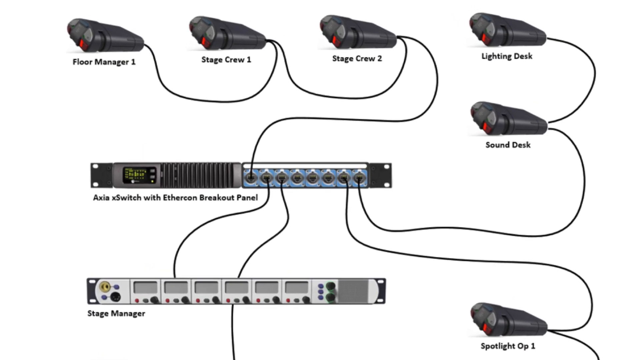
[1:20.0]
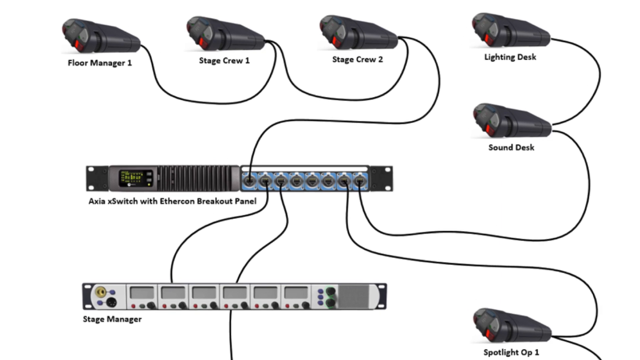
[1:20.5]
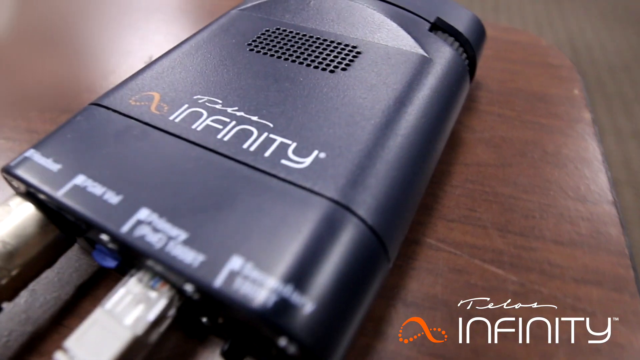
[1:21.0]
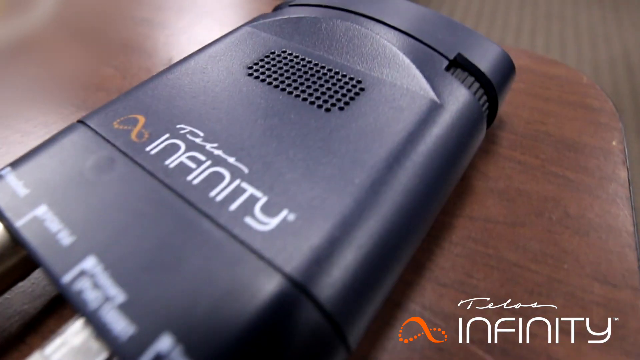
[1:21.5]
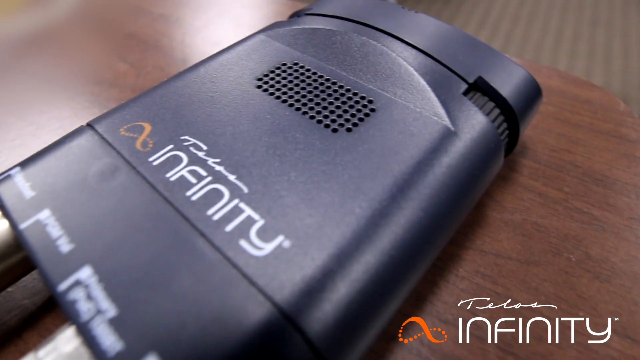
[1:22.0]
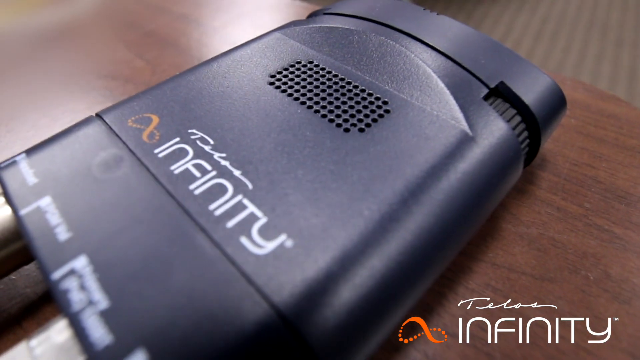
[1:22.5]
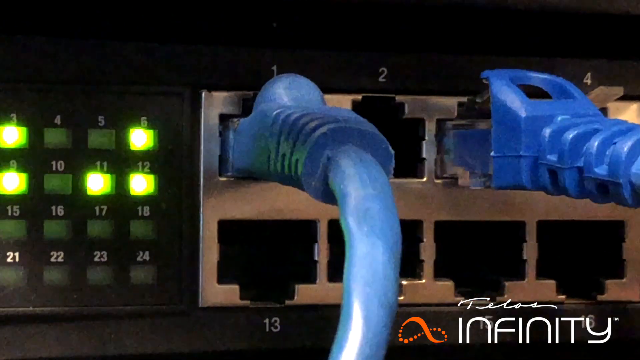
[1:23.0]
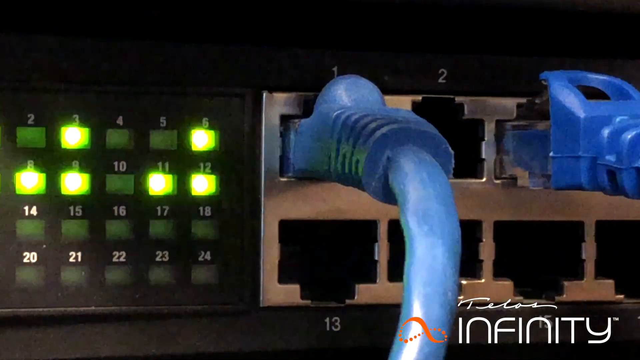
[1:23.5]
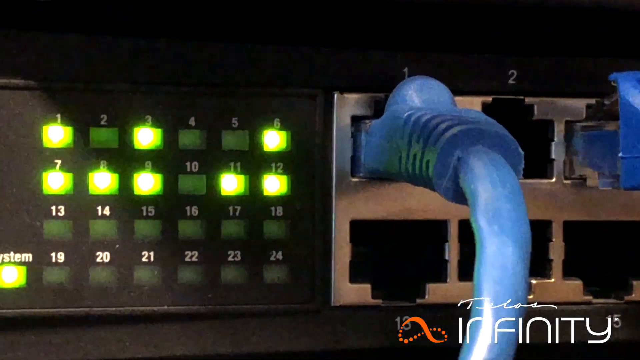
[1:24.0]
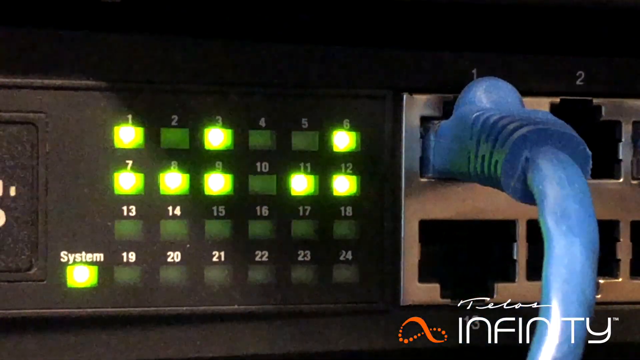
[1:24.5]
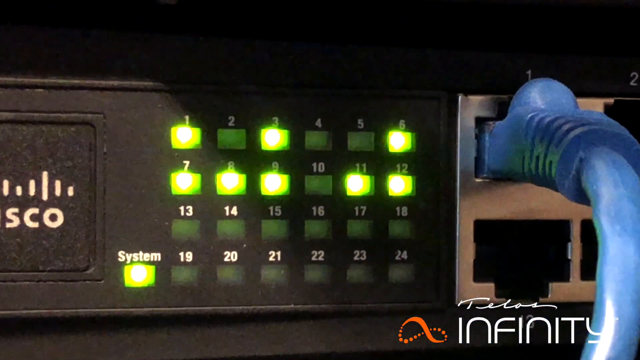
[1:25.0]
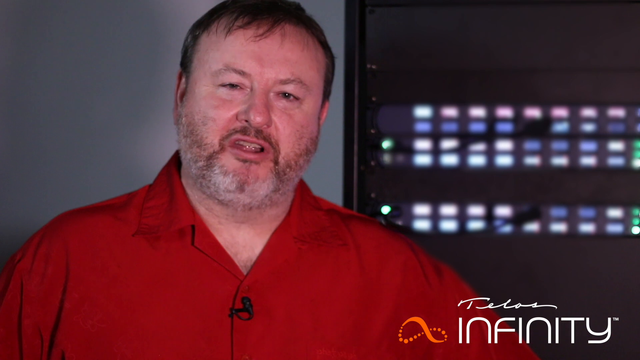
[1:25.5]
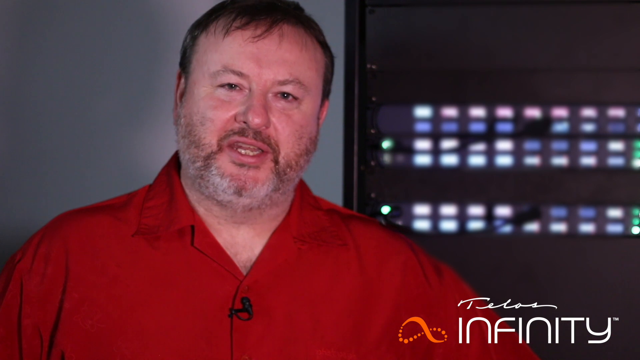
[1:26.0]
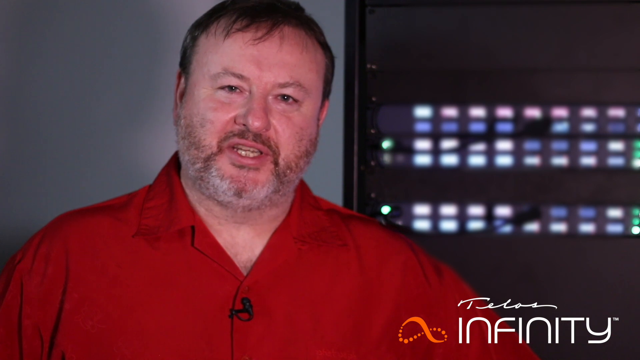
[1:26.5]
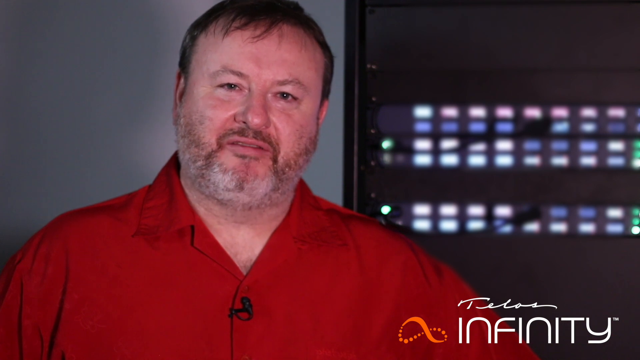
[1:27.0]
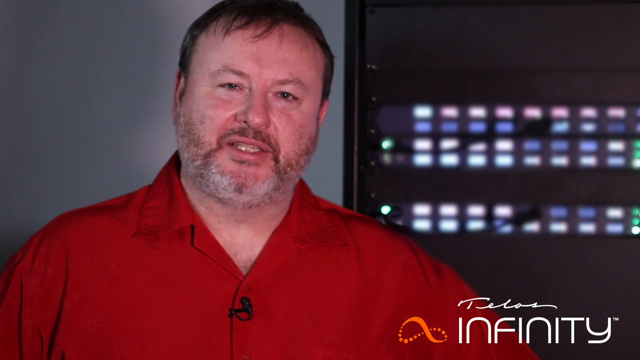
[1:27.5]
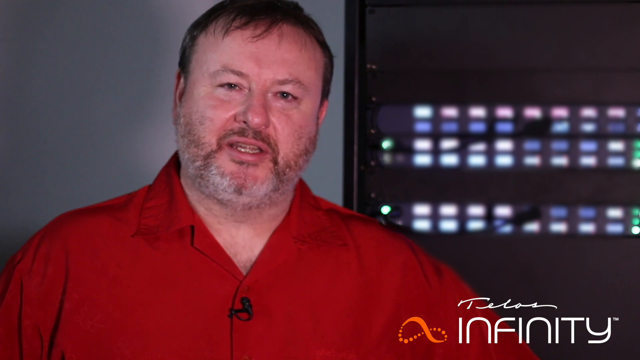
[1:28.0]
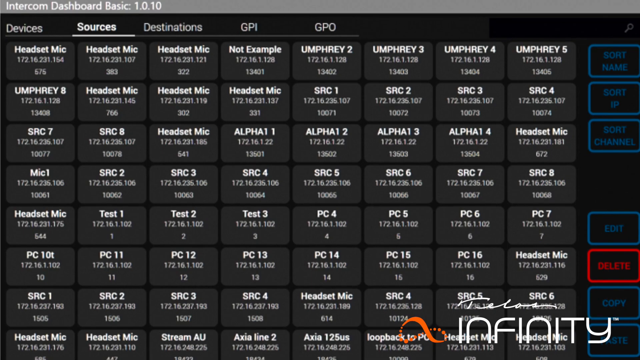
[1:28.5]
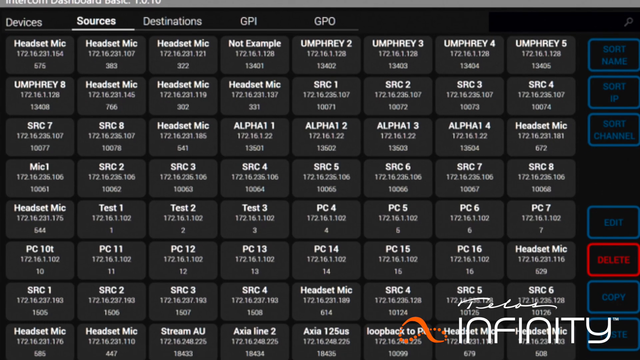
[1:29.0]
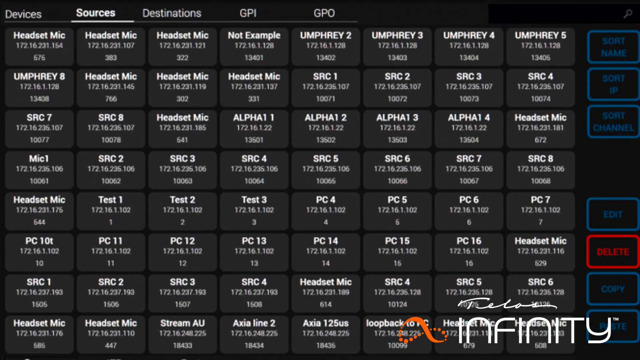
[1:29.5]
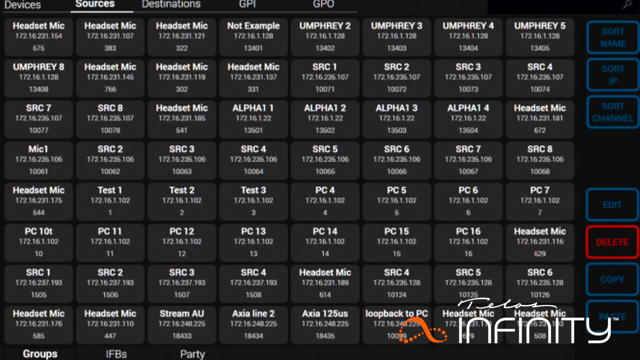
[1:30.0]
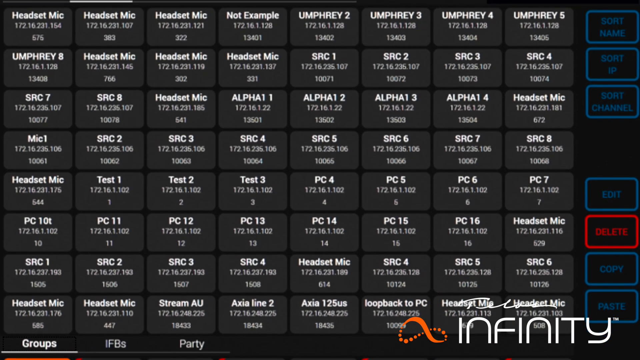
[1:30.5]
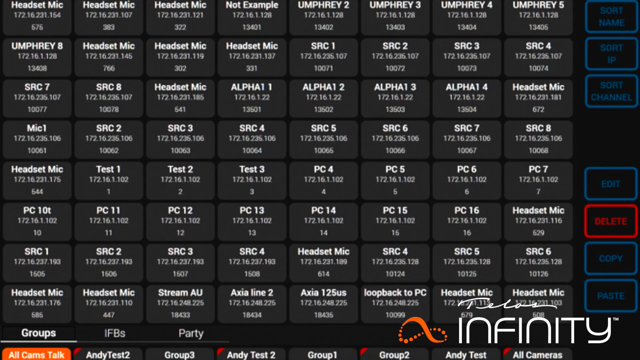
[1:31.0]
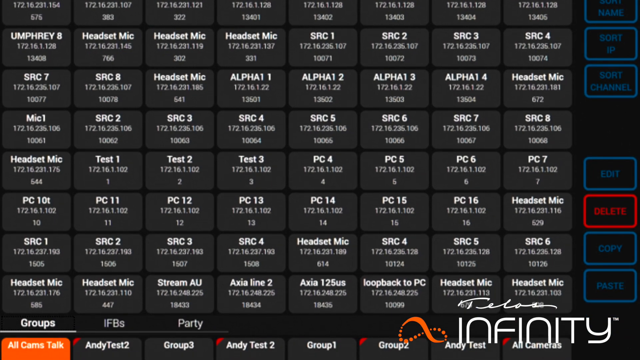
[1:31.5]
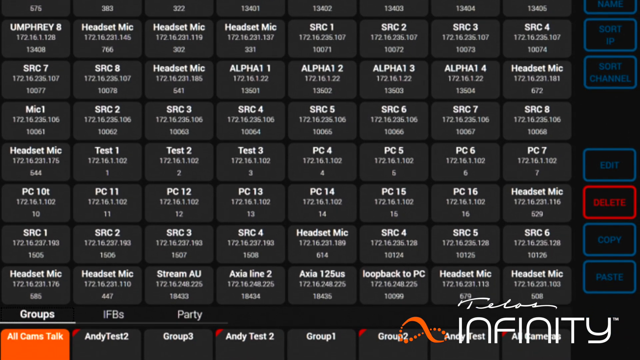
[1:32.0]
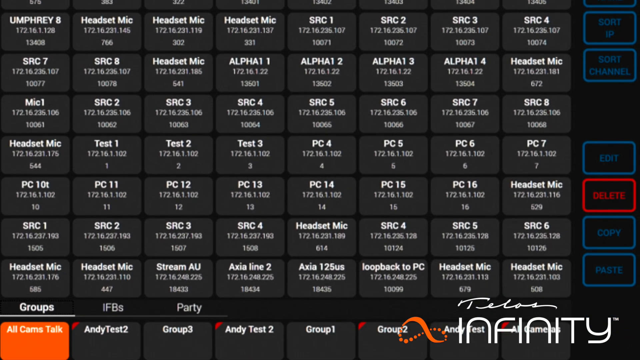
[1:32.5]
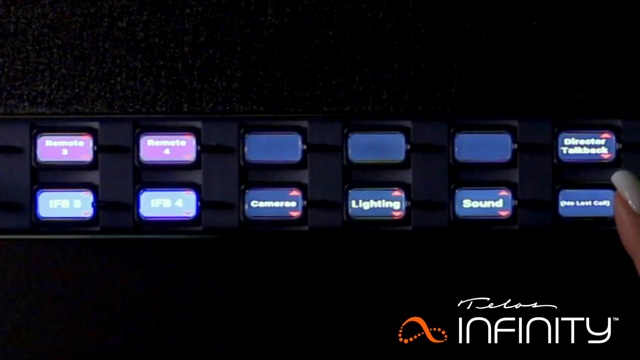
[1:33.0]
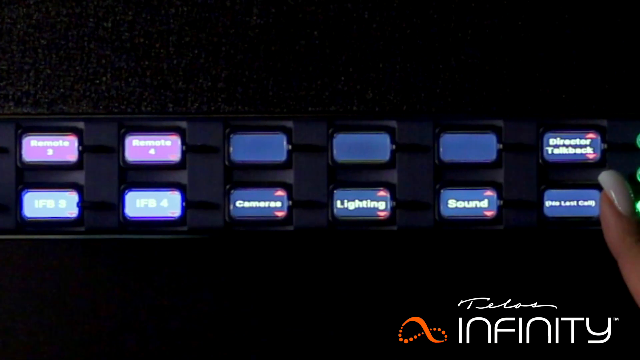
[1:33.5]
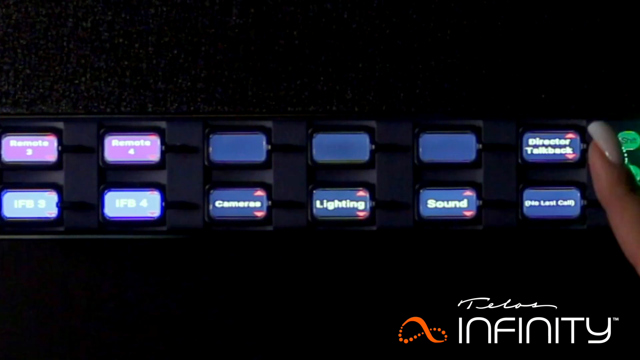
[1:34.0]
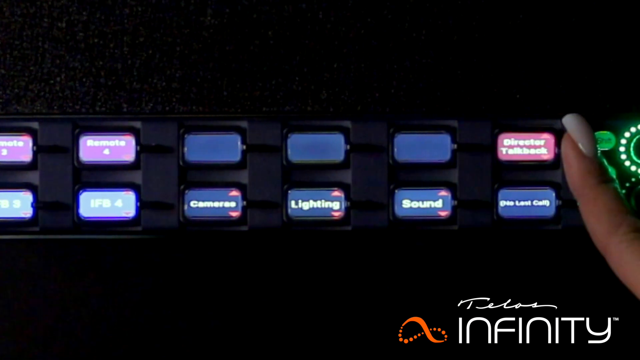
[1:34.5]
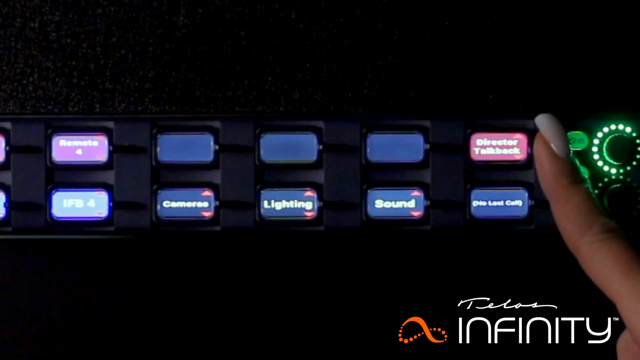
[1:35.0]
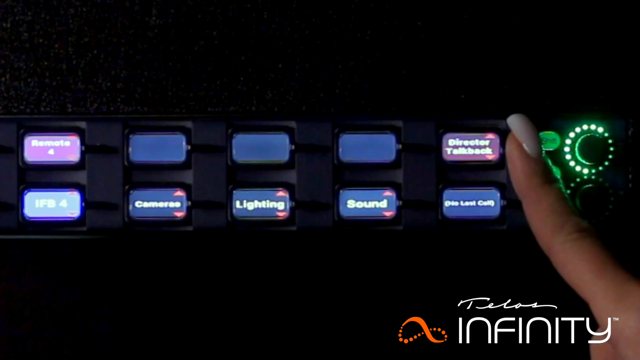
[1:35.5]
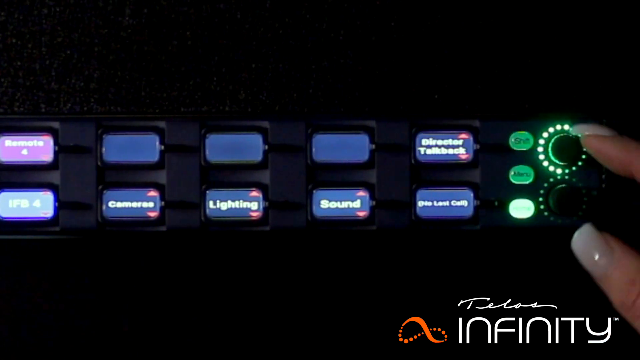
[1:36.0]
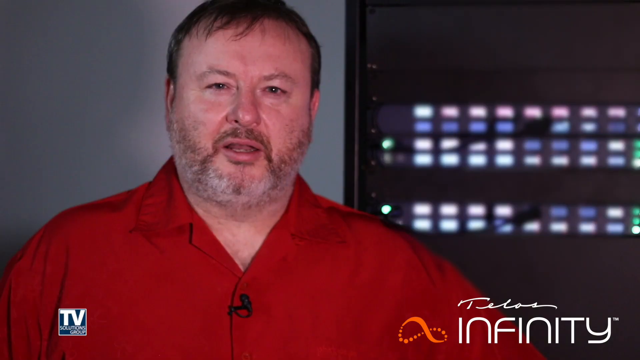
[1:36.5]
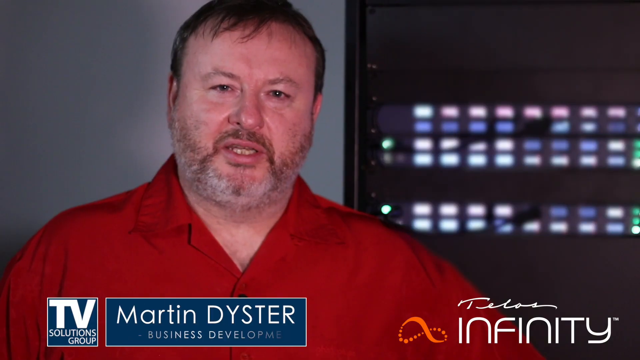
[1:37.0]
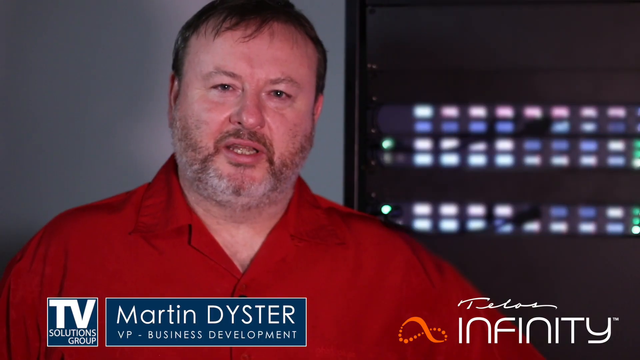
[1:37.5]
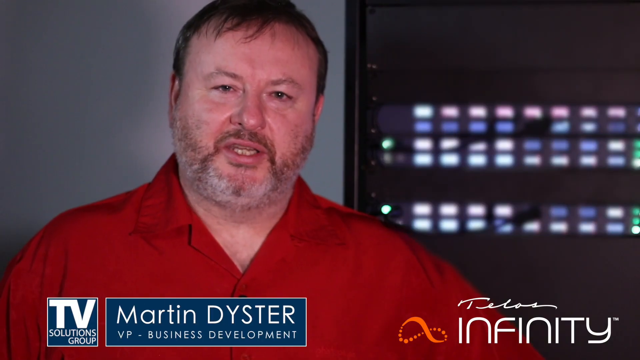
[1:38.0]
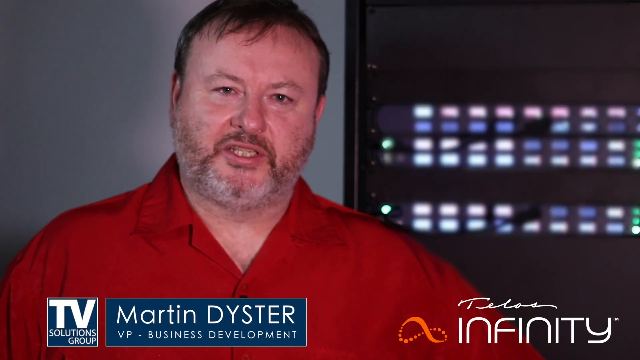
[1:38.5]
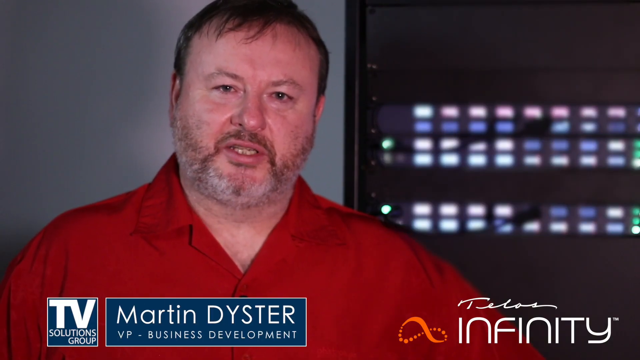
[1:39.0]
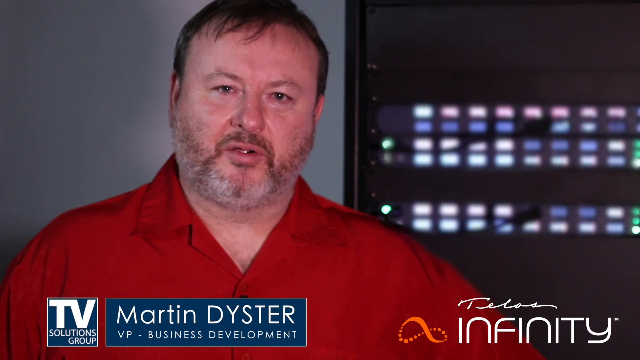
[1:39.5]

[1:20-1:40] A diagram shows indicators at the top for "Floor Manager 1", "Stage Crew 1", "Stage Crew 2" and "Flooding Deck", with "Sound Deck" underneath "Flooding Deck", a long illegible strip below, and at the bottom a bar that says "Stage Manager" with another illegible area to its right. Next, a black Infinity device is lying on a brown wood grain table. Green buttons flash on the left of the screen, in four rows labeled from 1 to 24. On the right side of the screen, a blue cord is plugged into the back of the device, with another blue cord plugged in to the right of it. The man in the red button-down shirt, seen repeatedly in the video, speaks to the camera again. The screen changes to a black screen with white text labels for all the microphones and headsets, in seven layers. On the top left, "sources" is highlighted, while the unlit designations are "devices", "destinations", "GPI" and "GPO". Then two rows of buttons appear in the middle of a screen with a flat background, and a Caucasian hand points to a lit button. A thumb and index finger then move to a device on the right of the screen that has three buttons in a single line going down and two dials to the right of them. The man in the red button-down shirt speaks again.